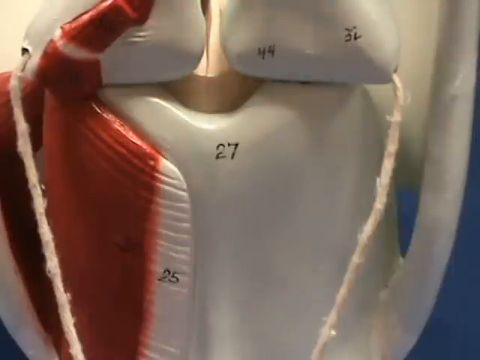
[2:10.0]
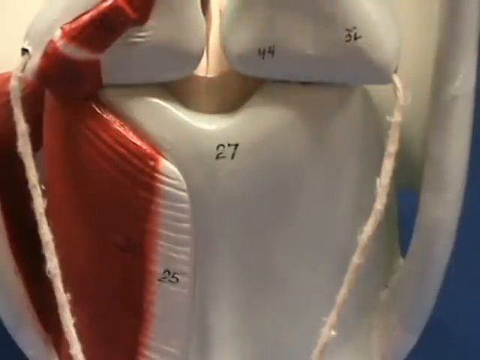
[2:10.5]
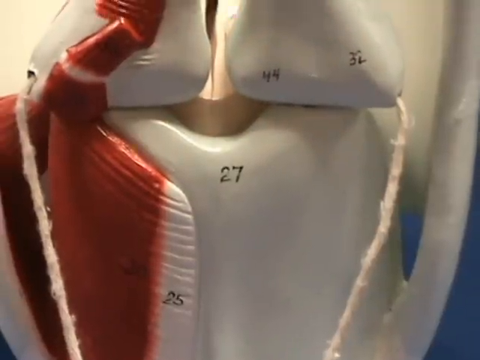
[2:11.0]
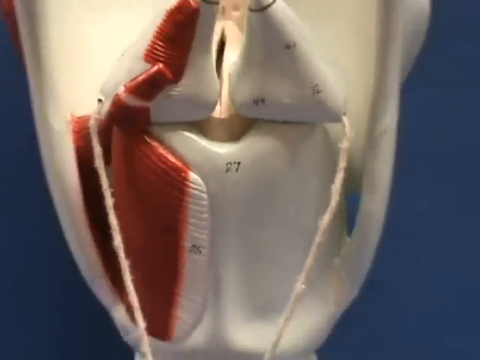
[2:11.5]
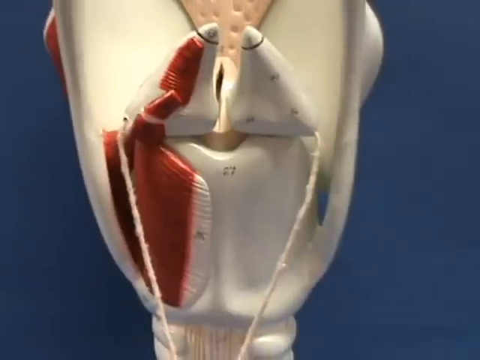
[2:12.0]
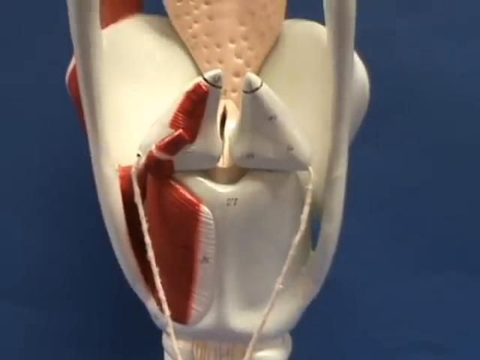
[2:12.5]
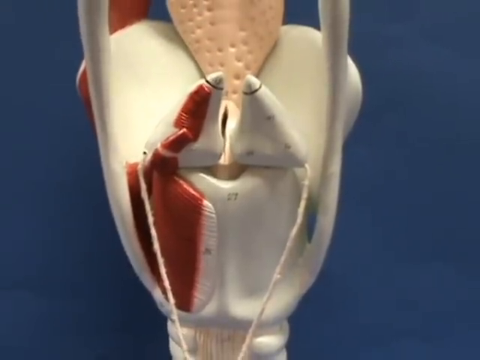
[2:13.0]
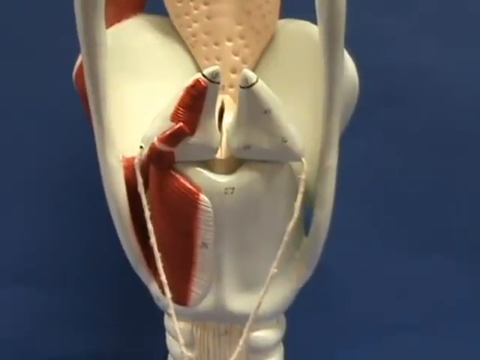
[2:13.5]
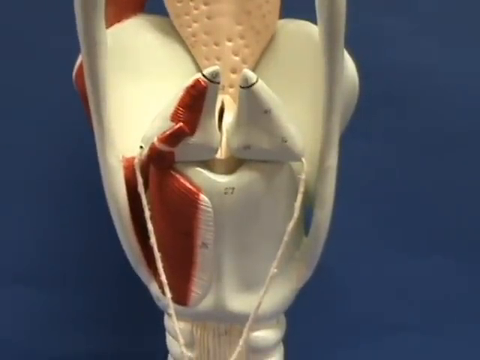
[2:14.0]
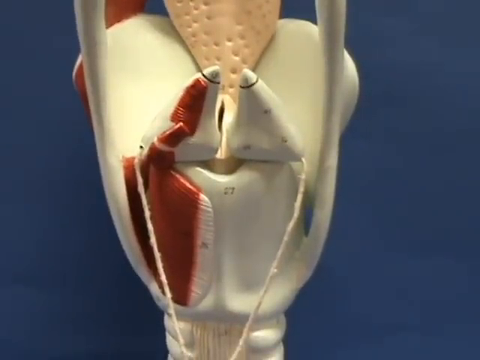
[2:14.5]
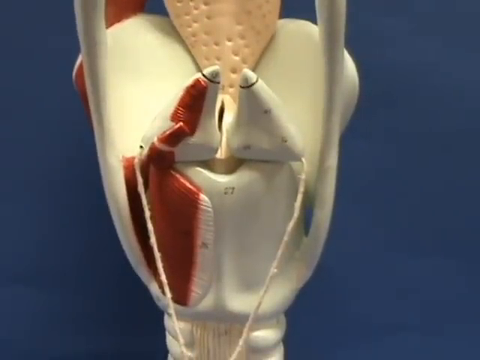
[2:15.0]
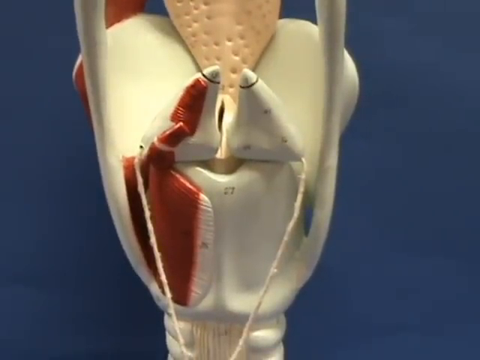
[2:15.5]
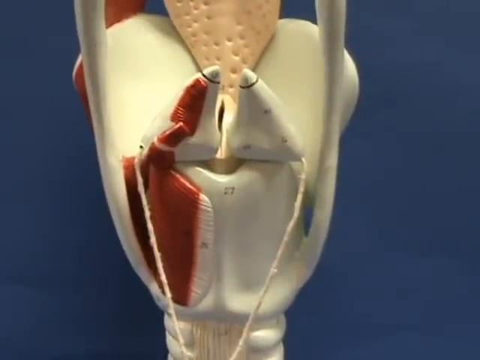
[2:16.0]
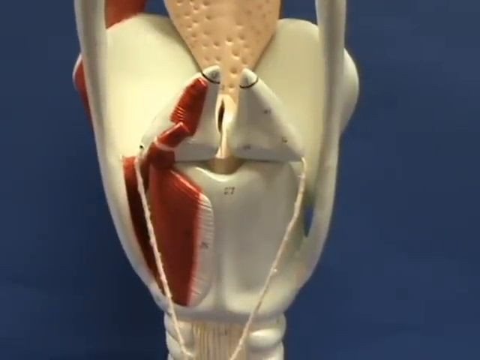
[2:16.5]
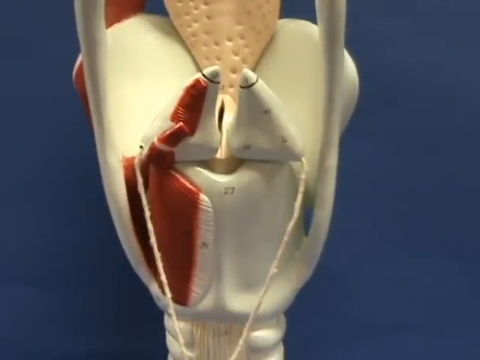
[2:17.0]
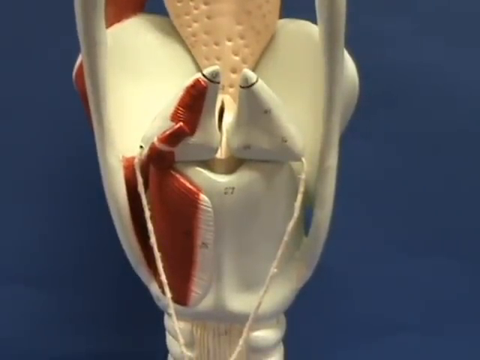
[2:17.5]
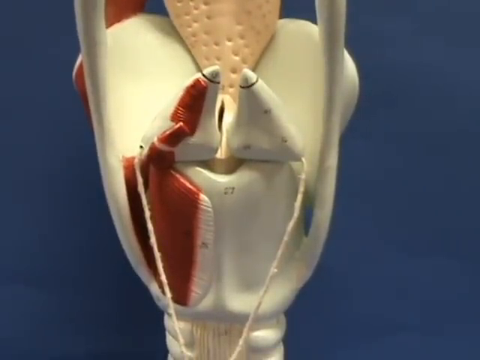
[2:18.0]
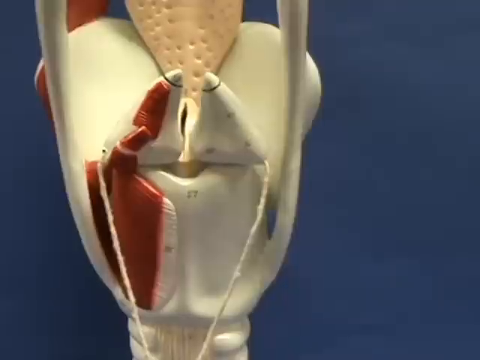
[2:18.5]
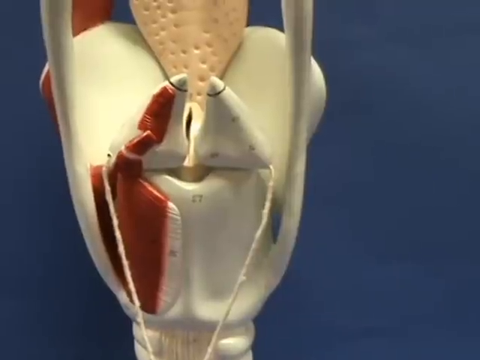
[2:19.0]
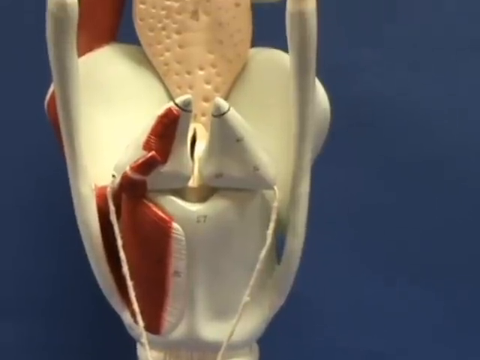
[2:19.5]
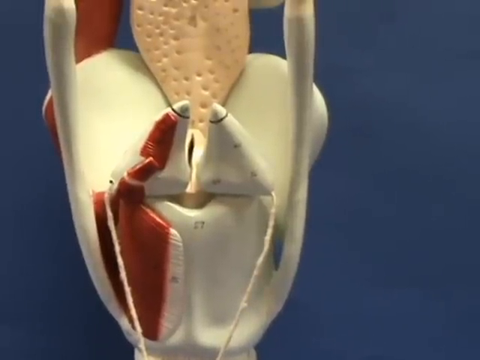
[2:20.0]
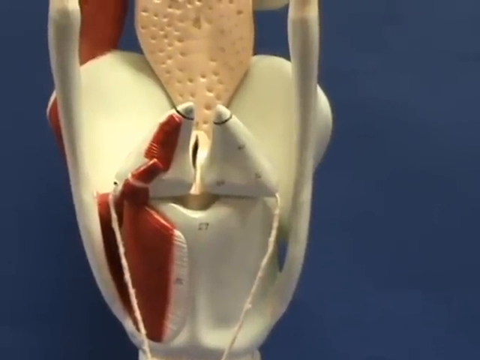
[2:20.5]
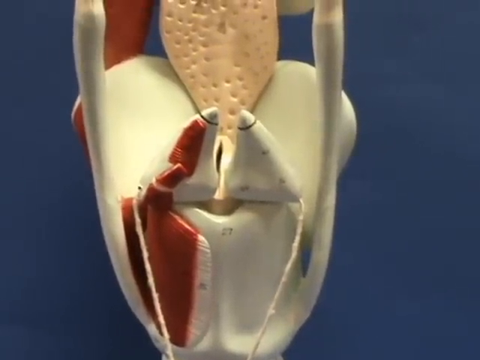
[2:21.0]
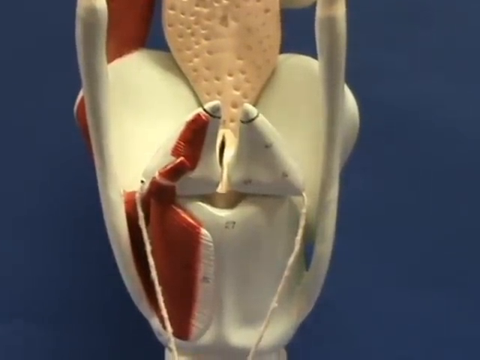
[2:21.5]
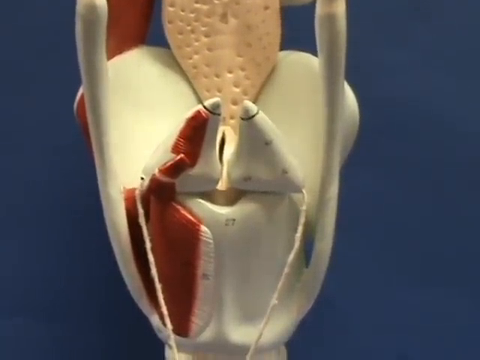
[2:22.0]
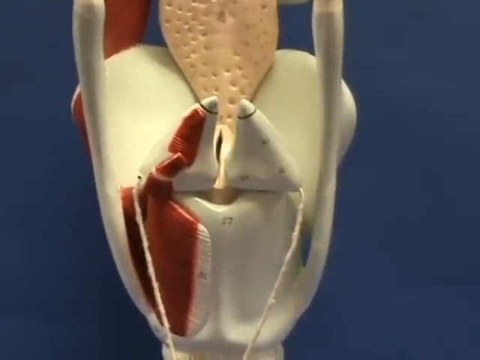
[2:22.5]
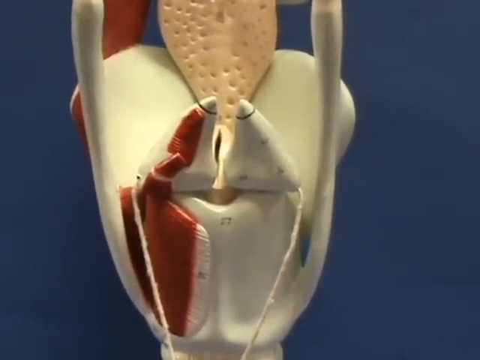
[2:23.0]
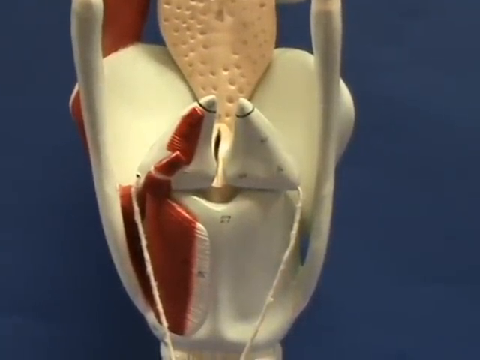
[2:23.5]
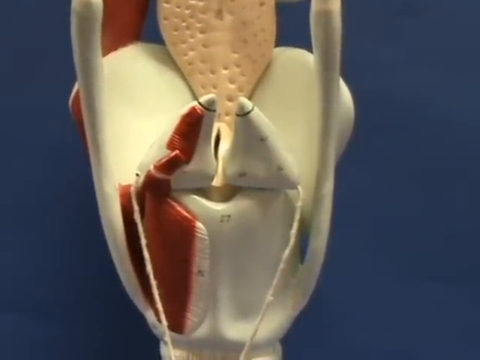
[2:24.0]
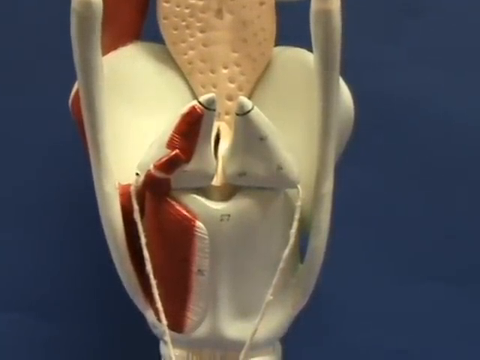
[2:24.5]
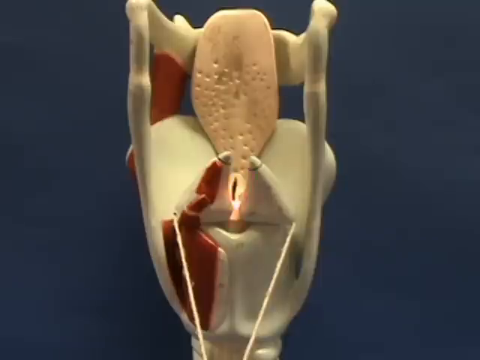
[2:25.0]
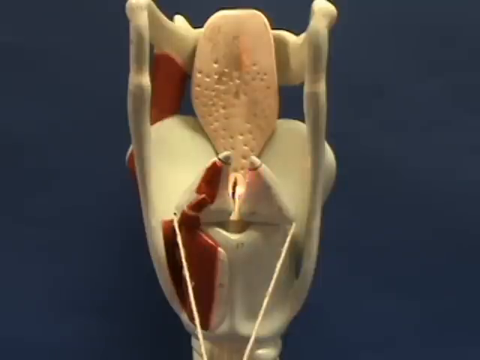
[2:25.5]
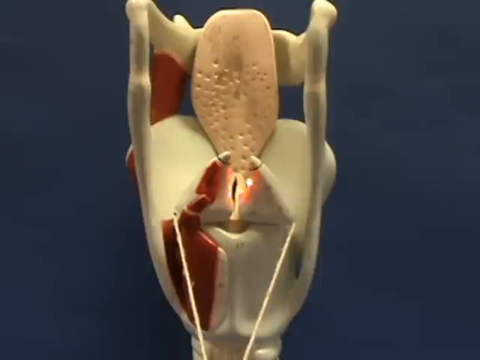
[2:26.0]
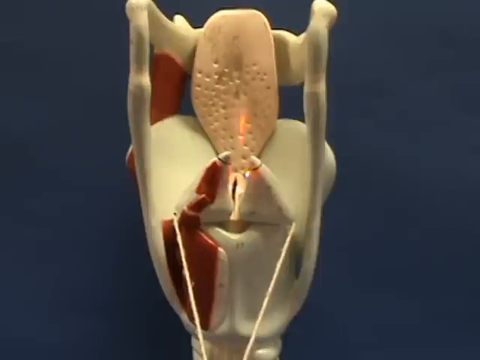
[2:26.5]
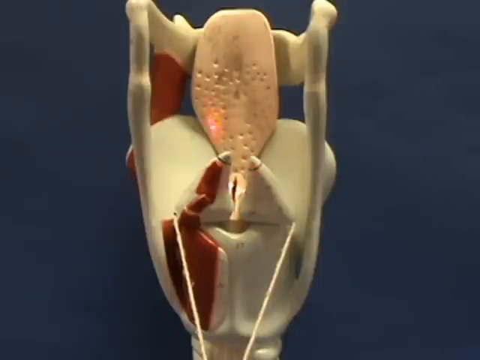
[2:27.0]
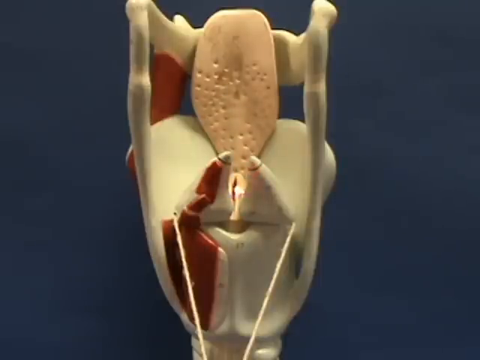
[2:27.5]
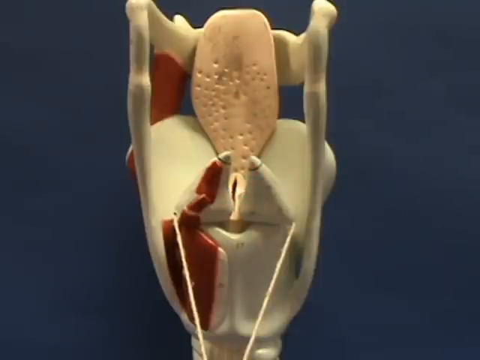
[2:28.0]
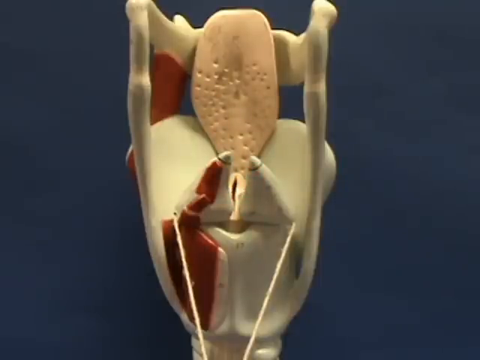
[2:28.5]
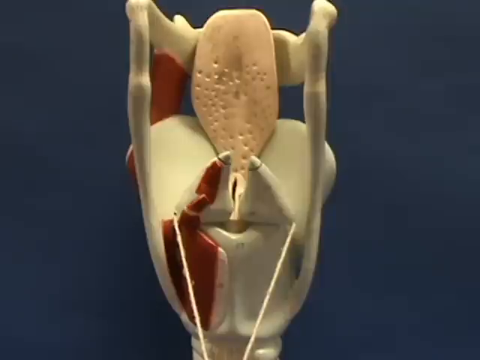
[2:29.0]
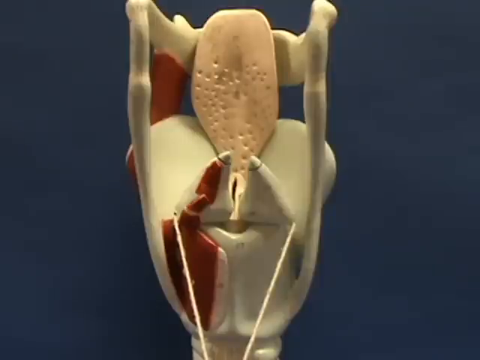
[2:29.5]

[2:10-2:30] On a dark blue screen, a model of a larynx sits in front of the blue wall; it looks somewhat like a face sitting up. Bones start at the bottom, go up, sprout outward a little, then go straight up, and a bone attaches the two at the top. Up at the top is an area that looks like a tongue, and at the bottom of that are two pointy bones, one on the left and one on the right. They are identical except that the left one has a blood-red stripe going down the outside of the tooth-like bone, continuing into another blood-red area; the right one has no blood-red coloring. Someone points a laser pointer at different areas of the model.